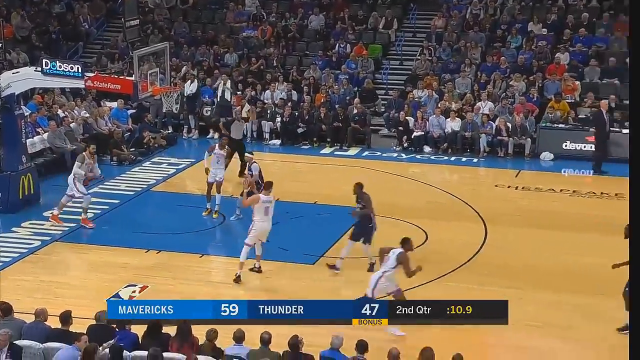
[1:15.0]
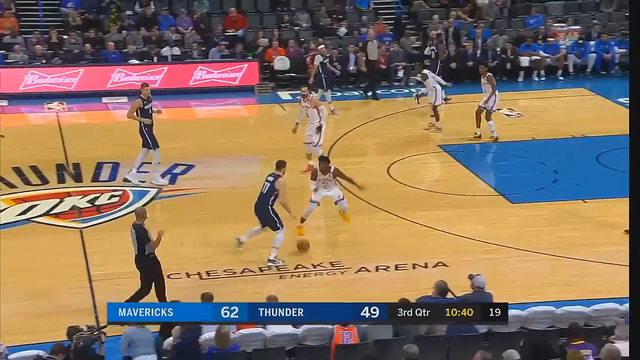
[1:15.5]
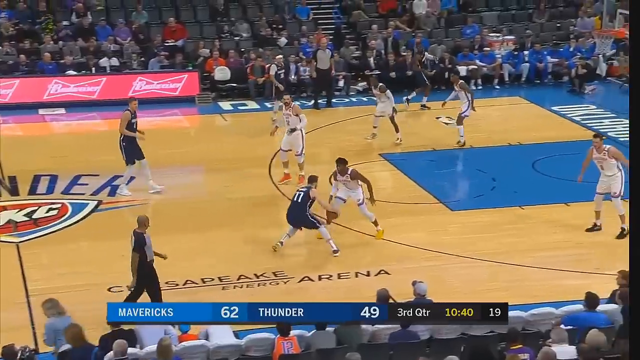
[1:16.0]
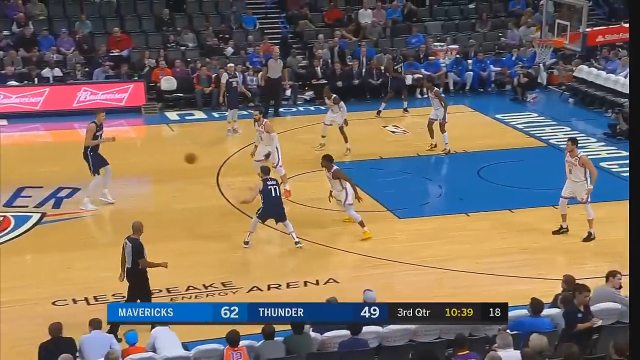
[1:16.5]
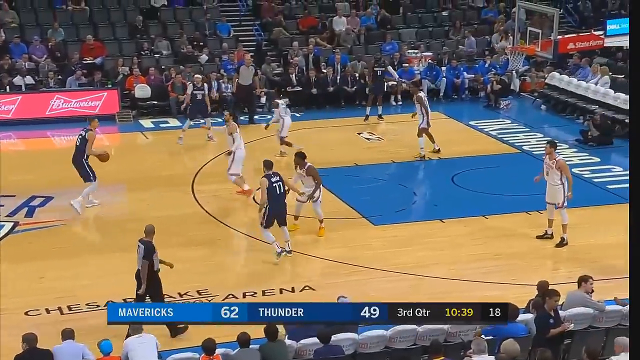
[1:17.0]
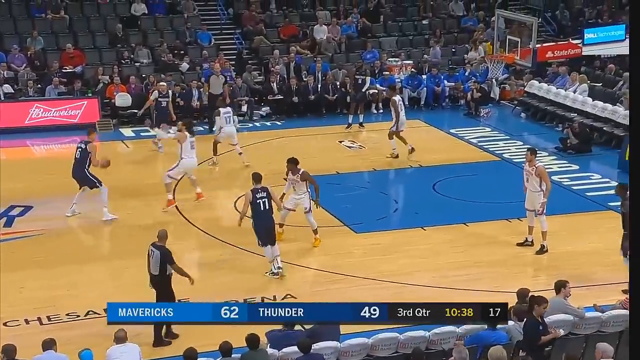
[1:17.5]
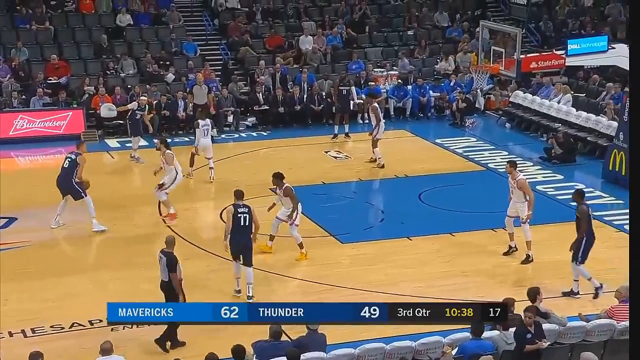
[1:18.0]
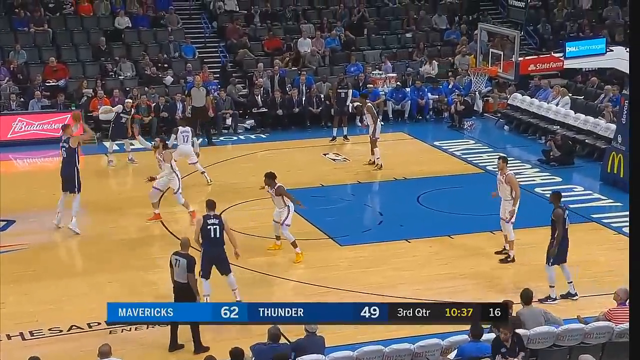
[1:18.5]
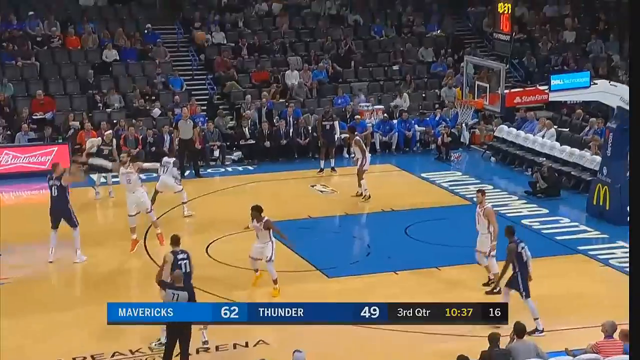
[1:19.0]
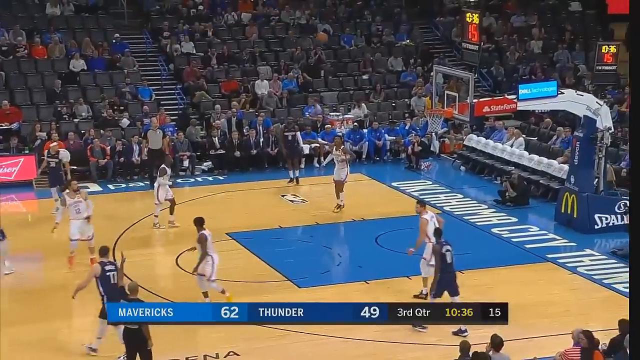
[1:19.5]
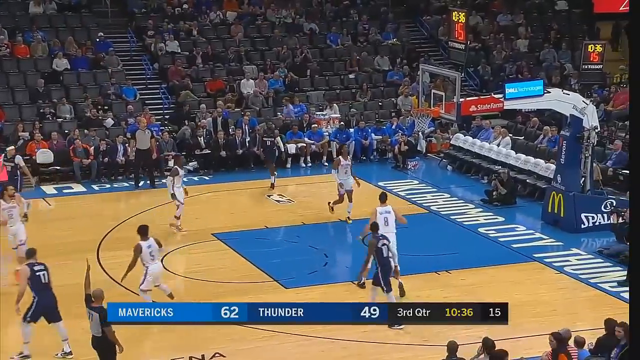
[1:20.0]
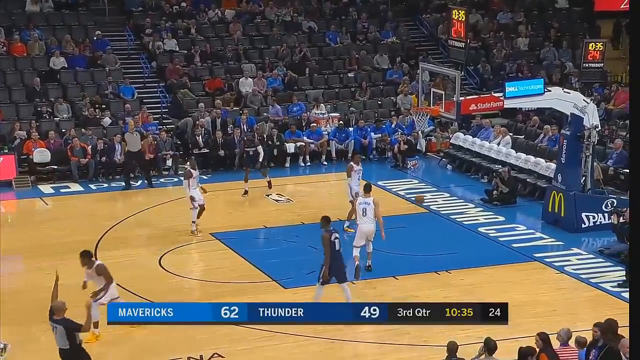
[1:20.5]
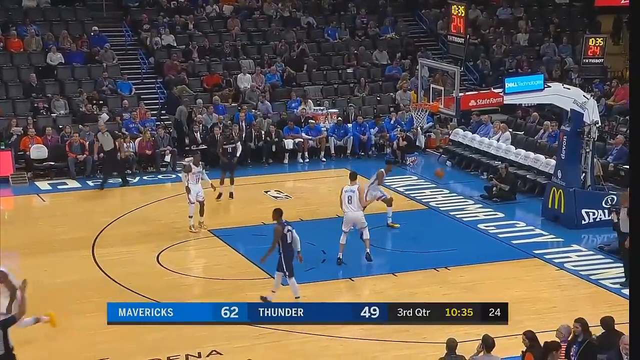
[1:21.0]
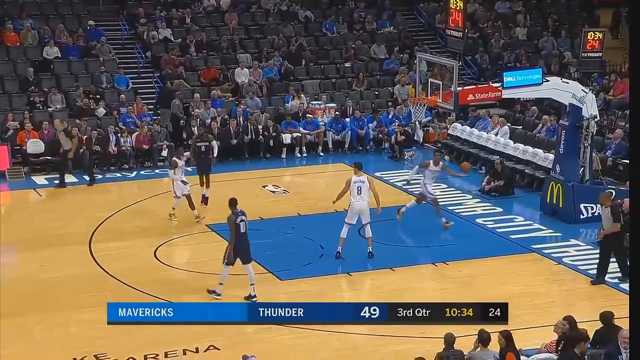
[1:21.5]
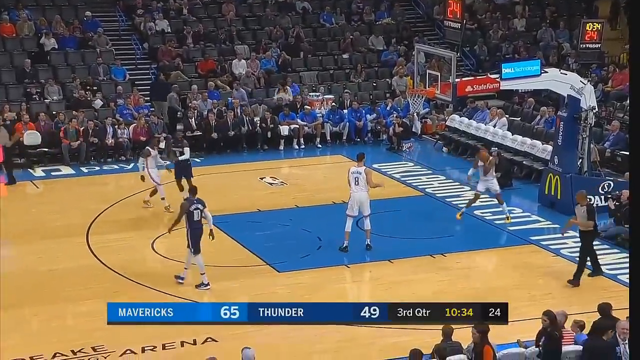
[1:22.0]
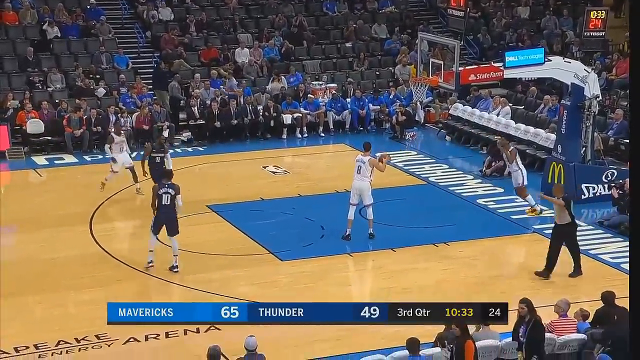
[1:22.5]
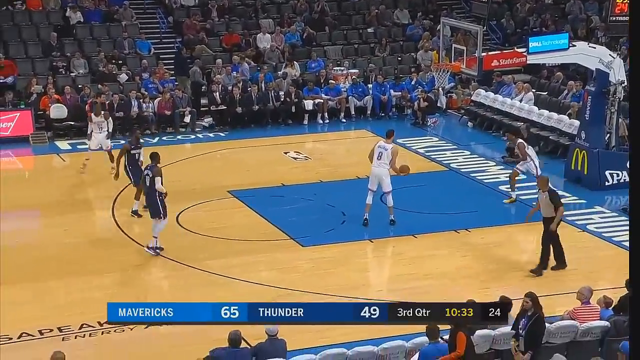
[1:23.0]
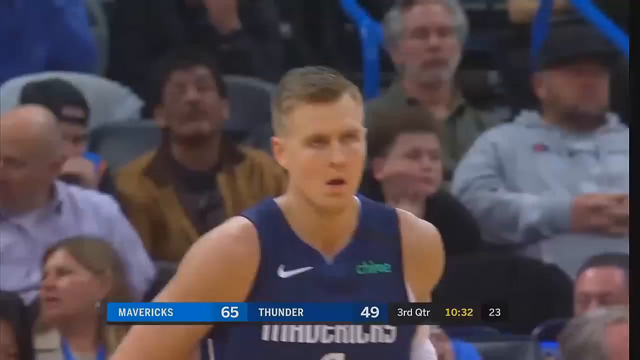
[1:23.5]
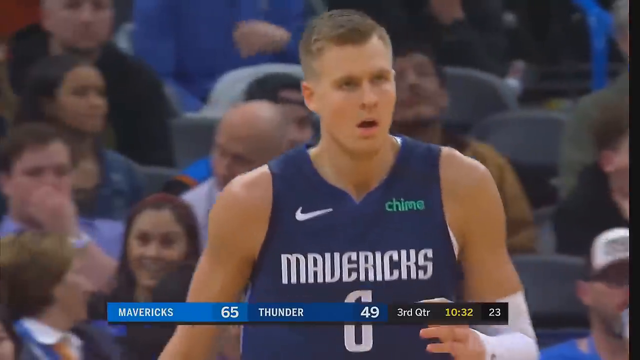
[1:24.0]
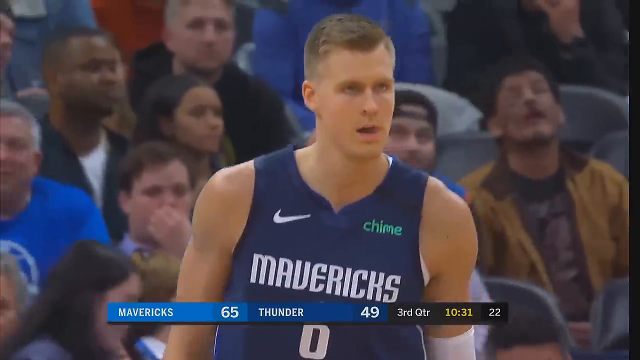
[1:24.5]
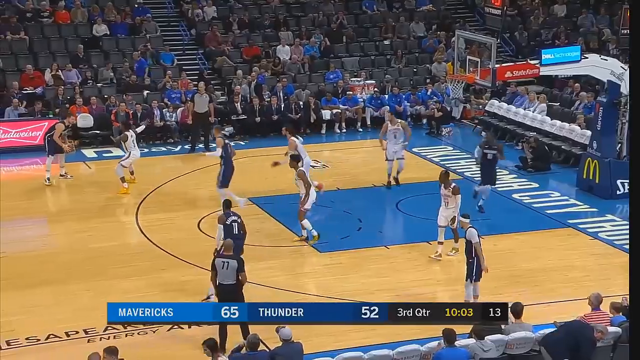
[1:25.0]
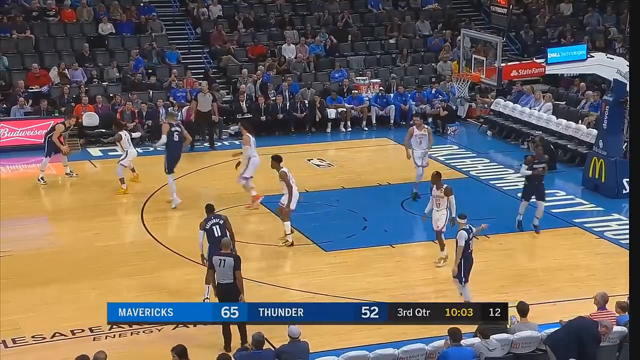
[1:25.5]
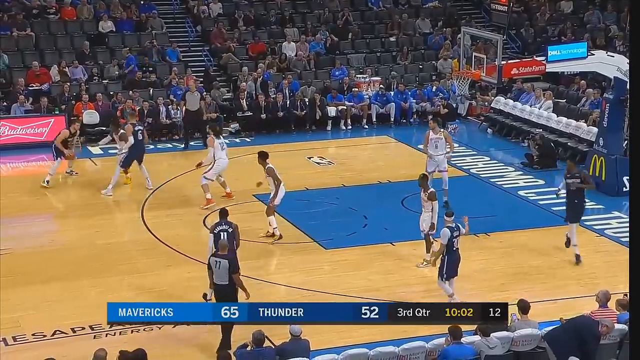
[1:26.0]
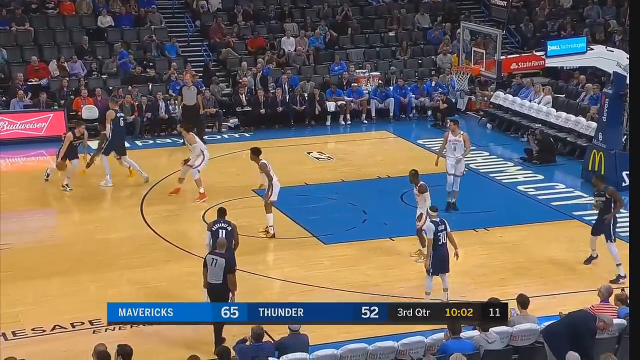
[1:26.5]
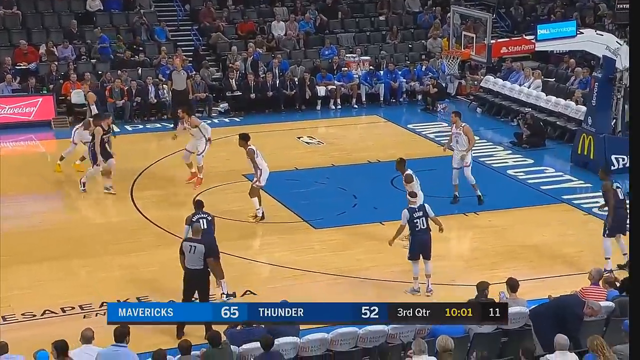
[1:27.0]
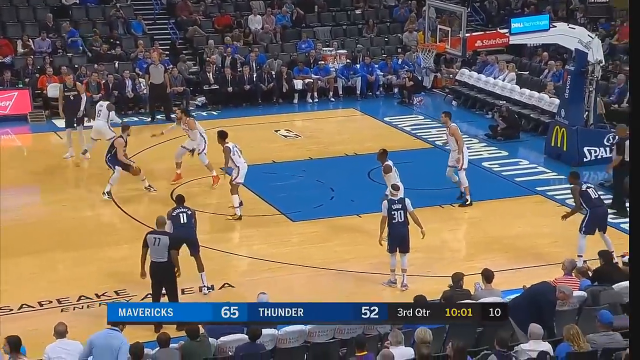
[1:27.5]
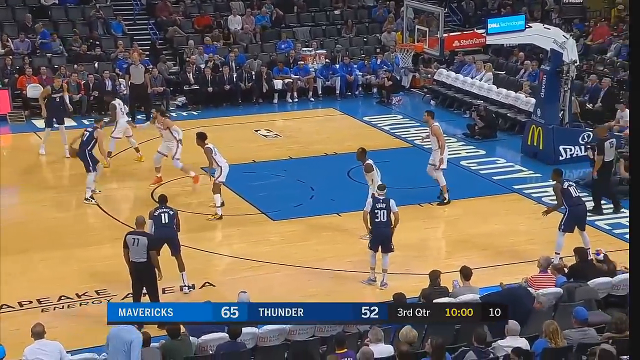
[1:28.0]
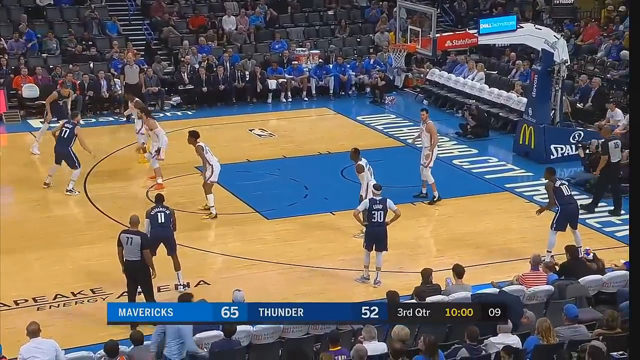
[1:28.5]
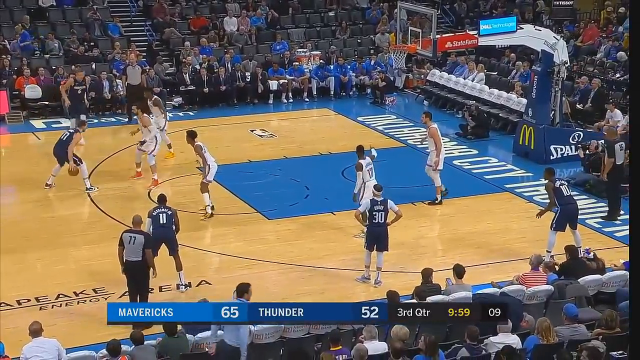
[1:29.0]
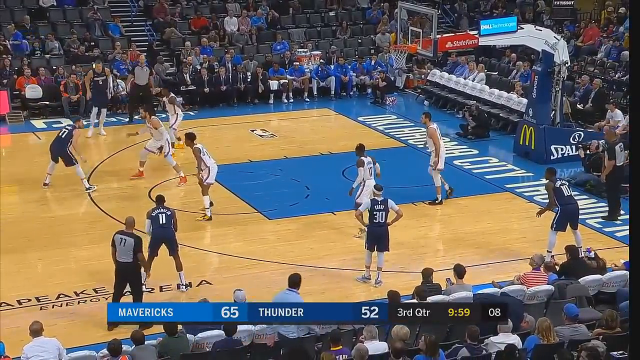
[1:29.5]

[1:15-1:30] In the third quarter, Doncic is off to the side while one of his teammates makes a three-point shot from quite a bit beyond the arc. The video then fast-forwards further into the game, and Doncic dribbles near the three-point line, perhaps getting ready to take a shot himself. He crosses over the line and then back out. Oklahoma City is guarding him somewhat more aggressively, with almost two men guarding him at the same time. There are 10 minutes and 34 seconds left, and the score is 65-49. A lot of empty seats are visible at this end of the arena. Some of the Oklahoma City players show not a lot of movement.